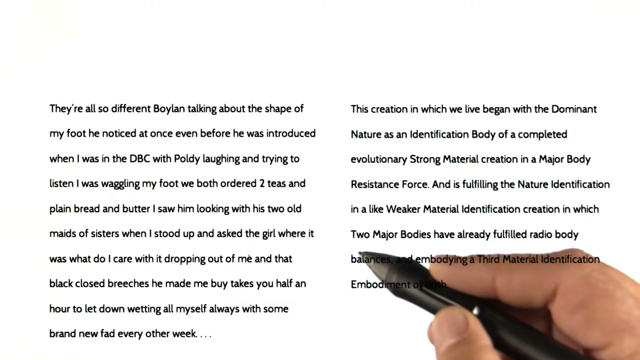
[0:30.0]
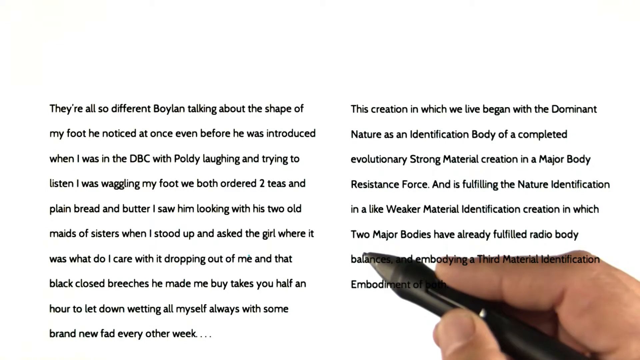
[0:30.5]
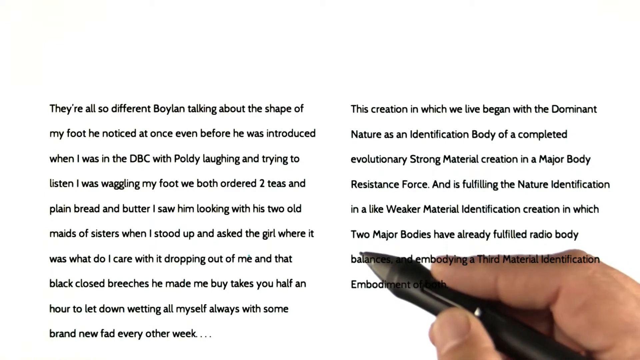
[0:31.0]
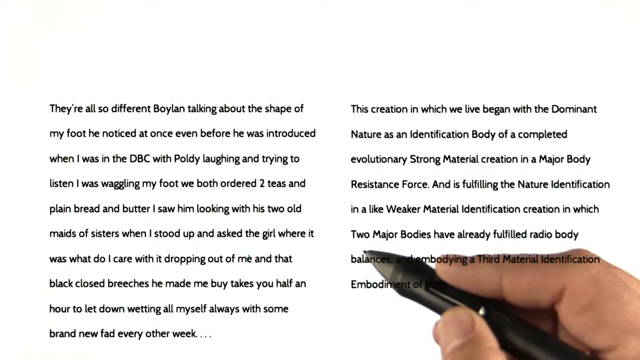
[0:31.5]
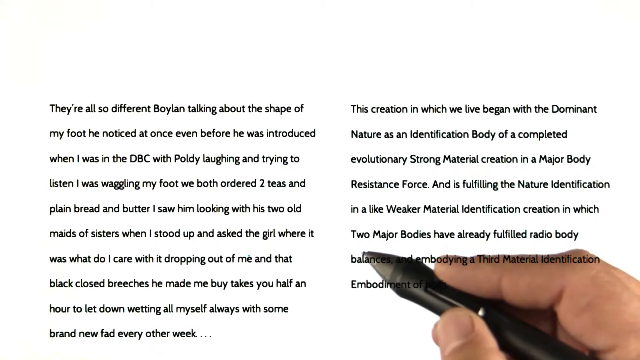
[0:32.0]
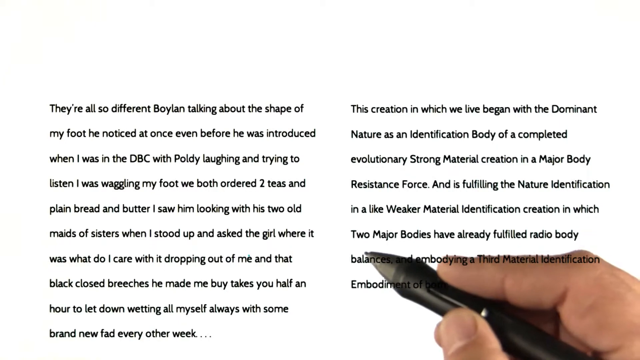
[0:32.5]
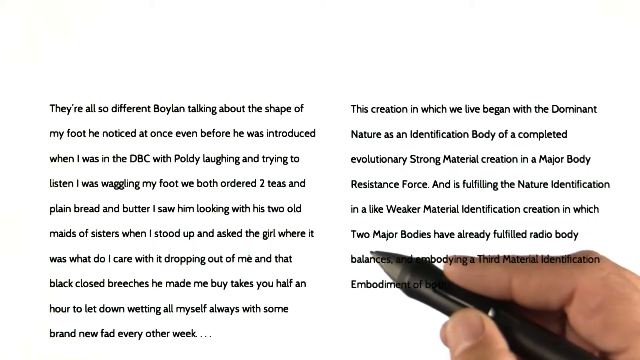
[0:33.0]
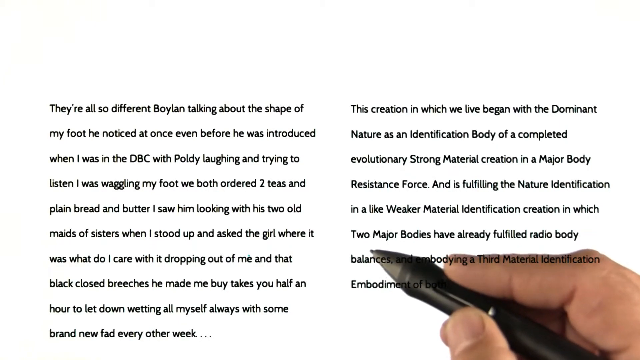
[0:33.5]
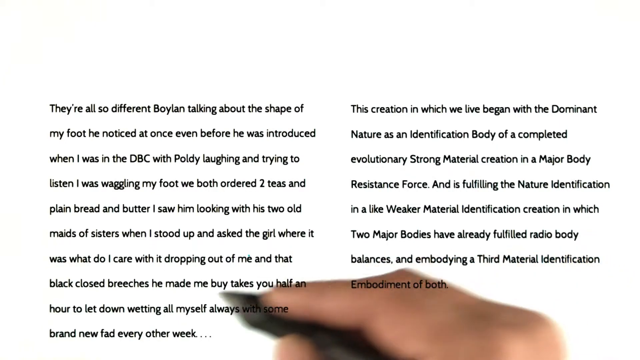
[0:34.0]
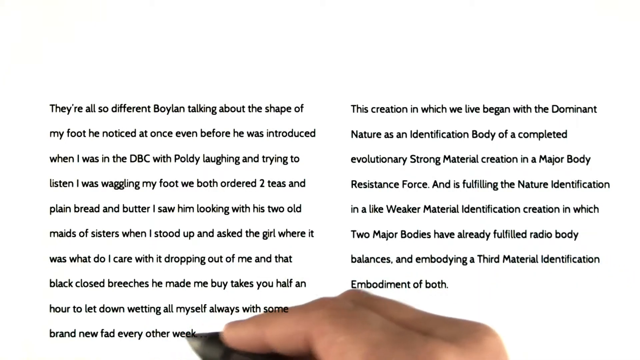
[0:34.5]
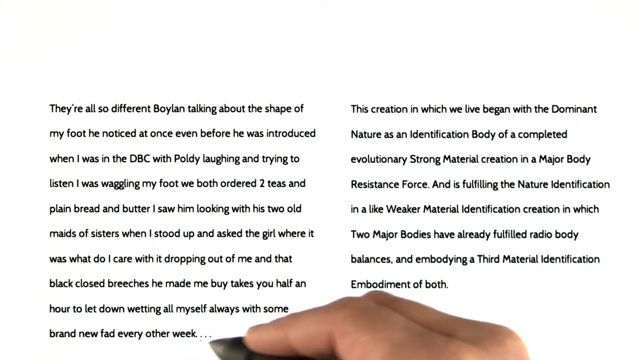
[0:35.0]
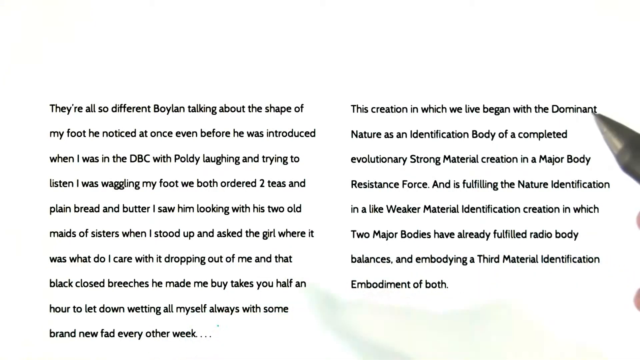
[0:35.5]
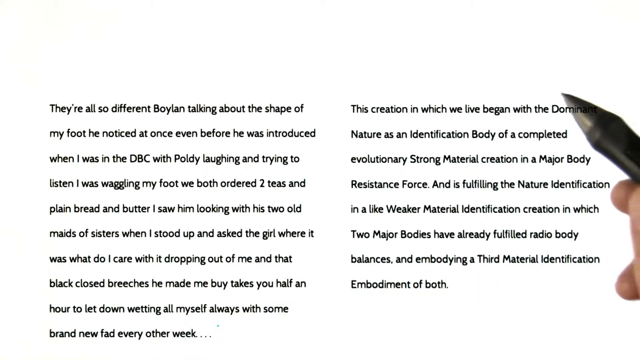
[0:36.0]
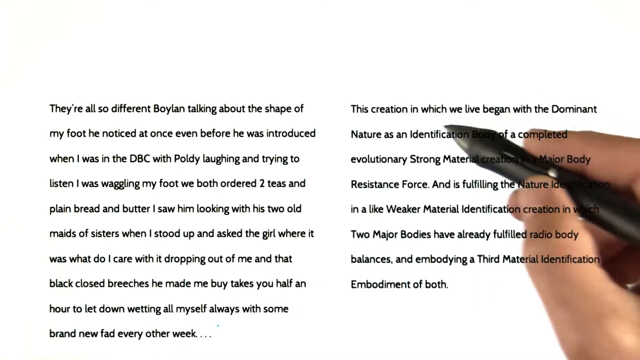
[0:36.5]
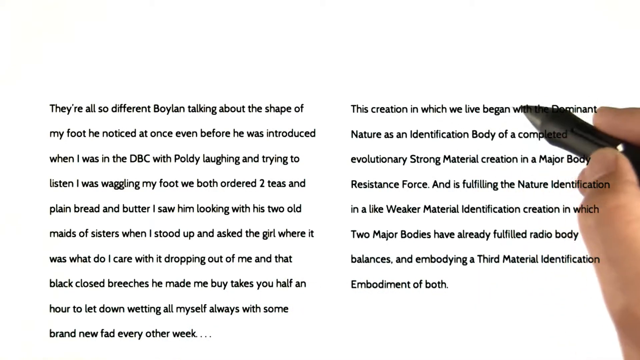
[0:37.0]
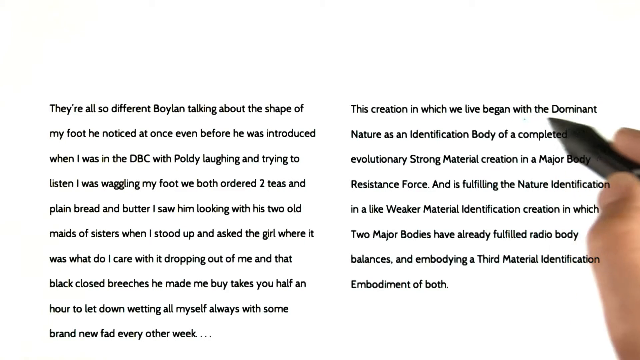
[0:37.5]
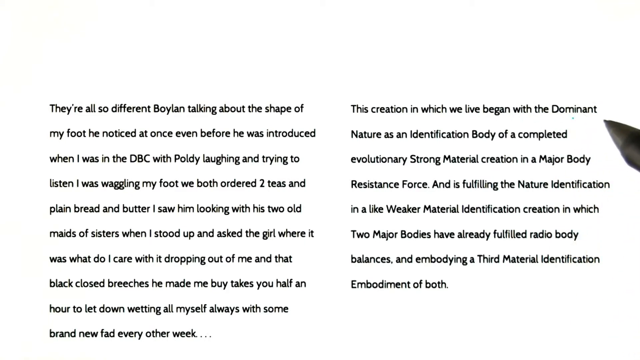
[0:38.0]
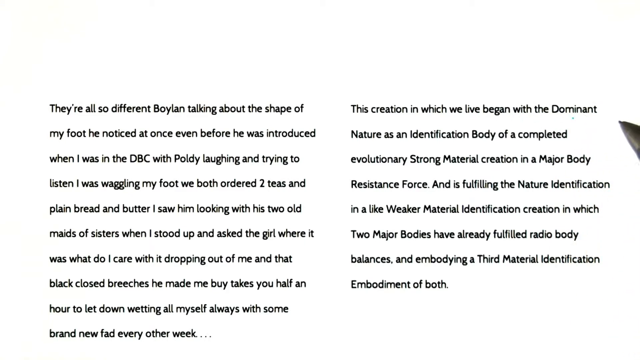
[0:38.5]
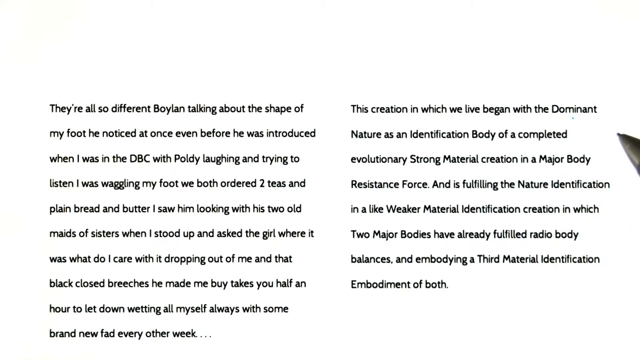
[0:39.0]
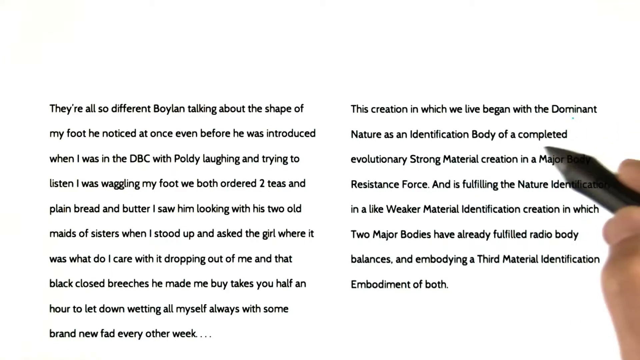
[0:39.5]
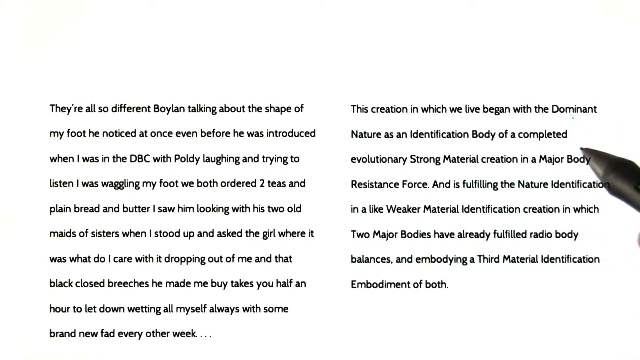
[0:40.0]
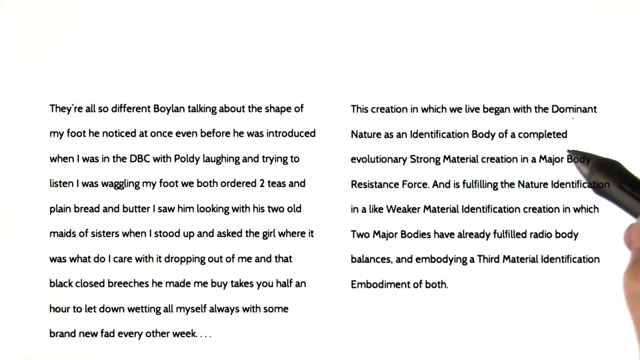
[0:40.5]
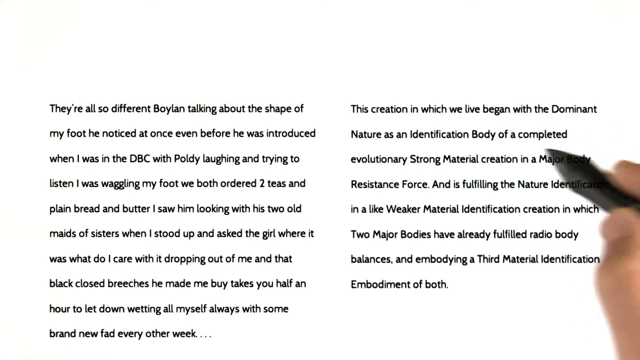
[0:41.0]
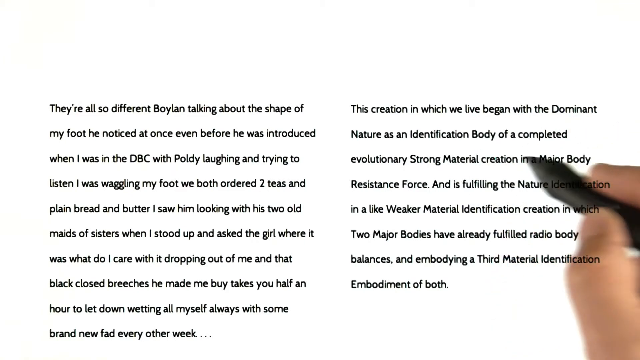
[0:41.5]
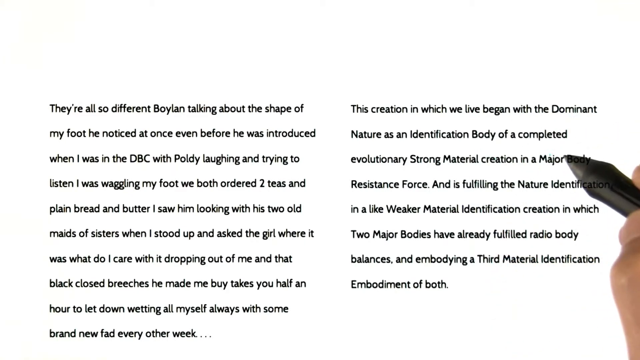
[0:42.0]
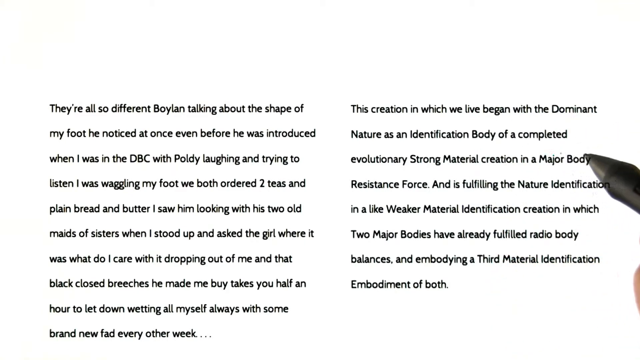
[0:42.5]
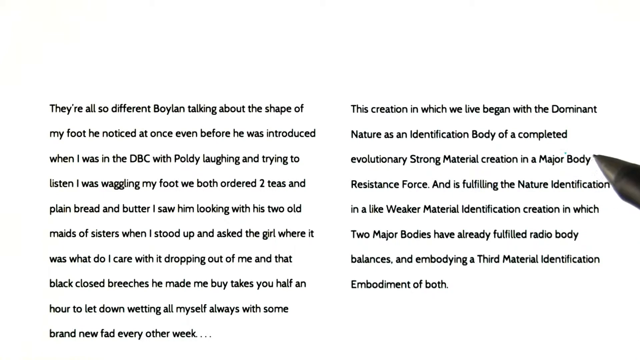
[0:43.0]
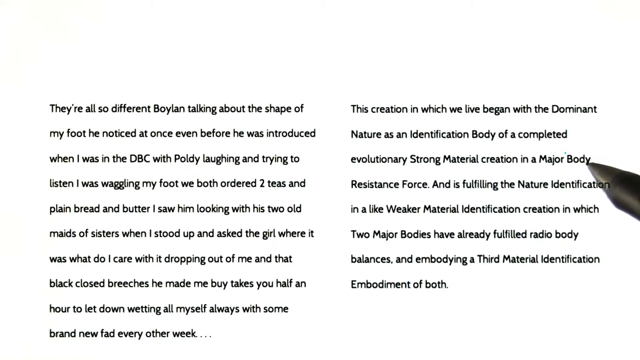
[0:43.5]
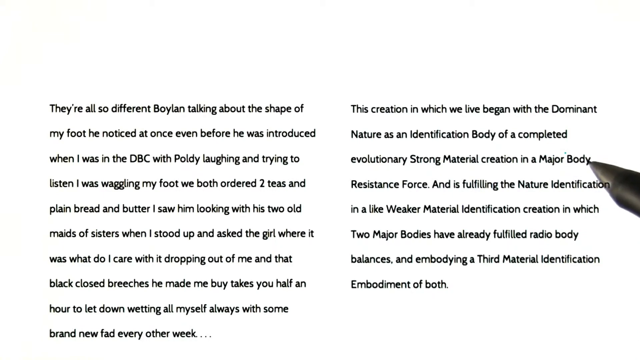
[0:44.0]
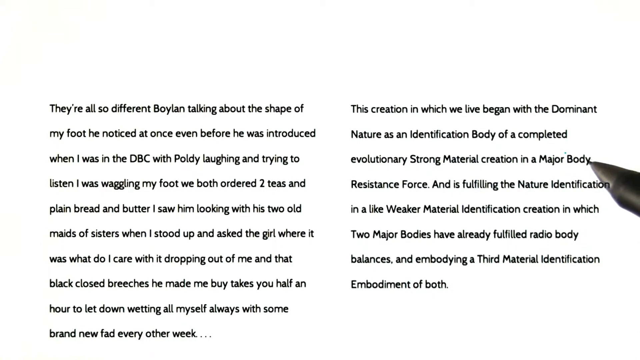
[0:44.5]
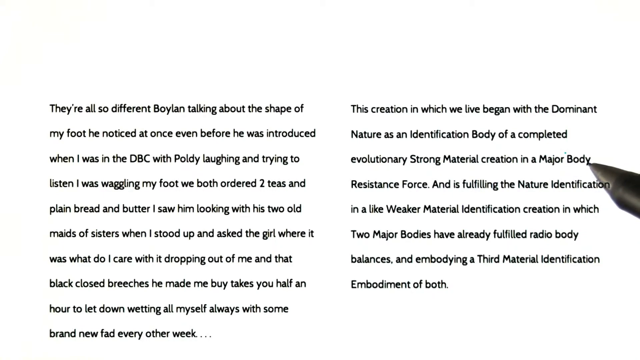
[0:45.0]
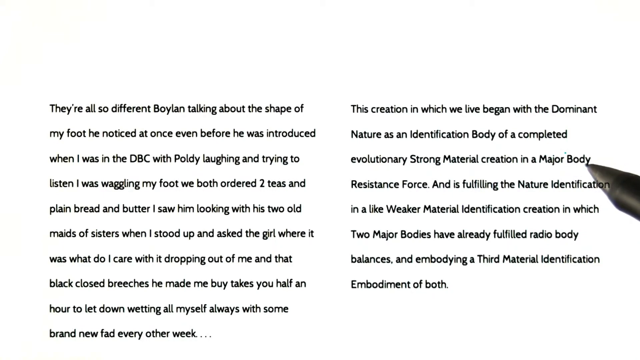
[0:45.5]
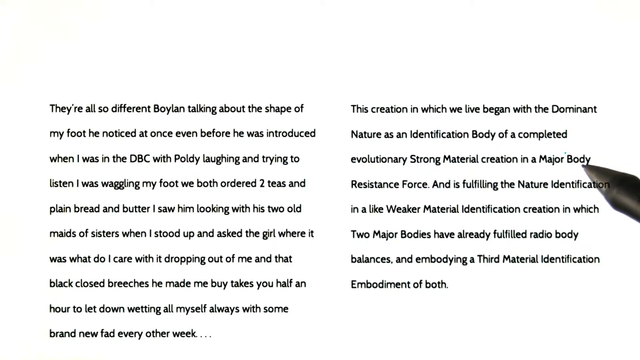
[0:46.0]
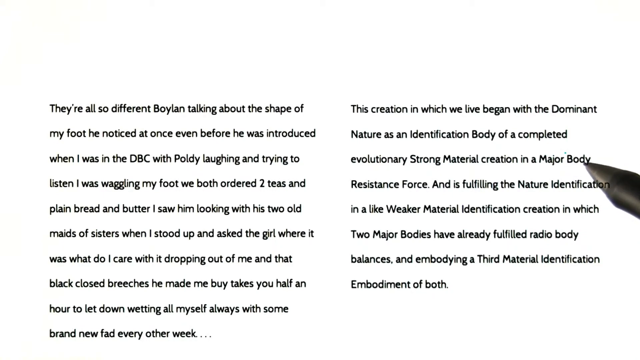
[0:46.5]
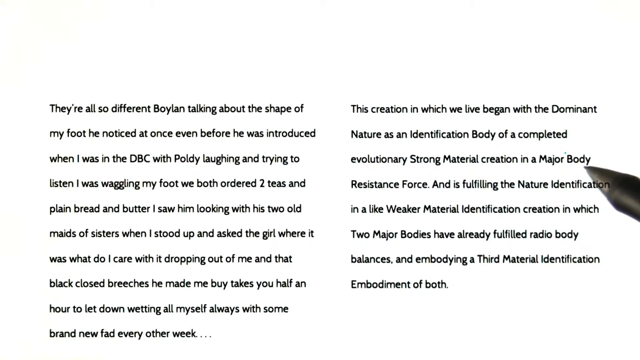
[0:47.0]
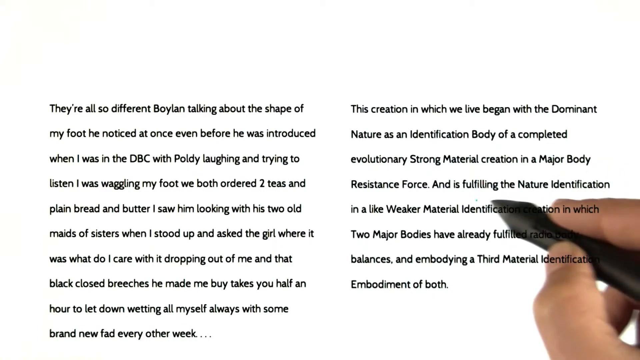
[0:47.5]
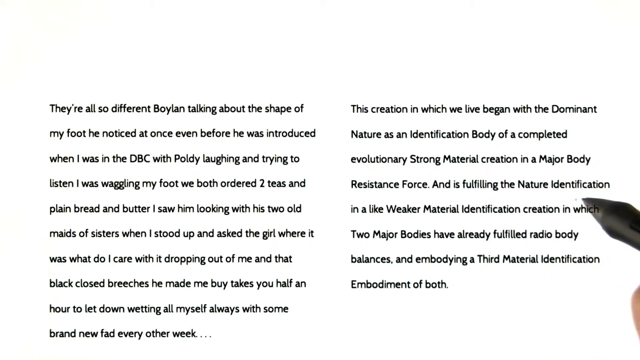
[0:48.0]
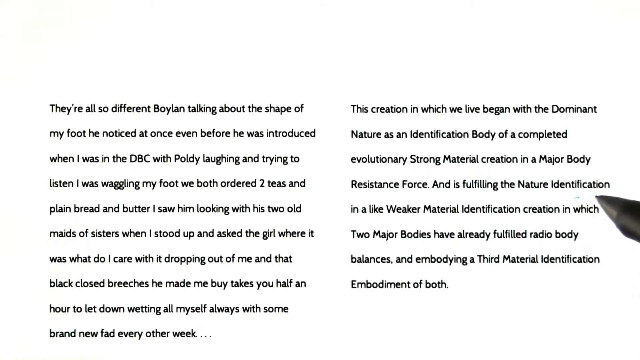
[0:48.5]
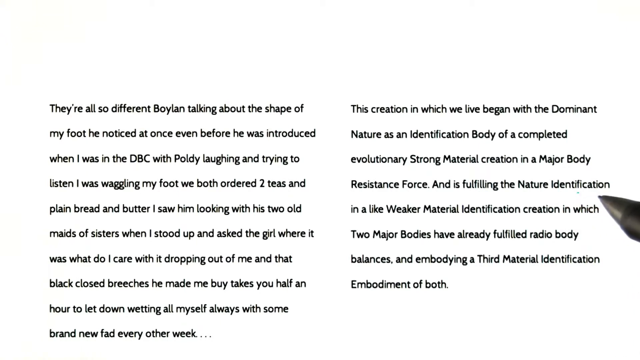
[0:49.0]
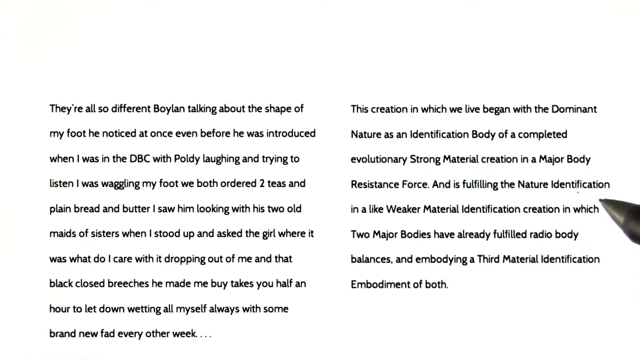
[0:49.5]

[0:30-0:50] The hand with the pencil continues to hover on the right side, under the line that says "two major bodies have already fulfilled radio body." It then moves quickly to the bottom left side and back up to the top far right, going down the left side of a couple of lines, including one beginning "this creation in which we live began with the dominant nature." The hand then hovers on the right side of the screen, just under the last word of each line of the right paragraph.